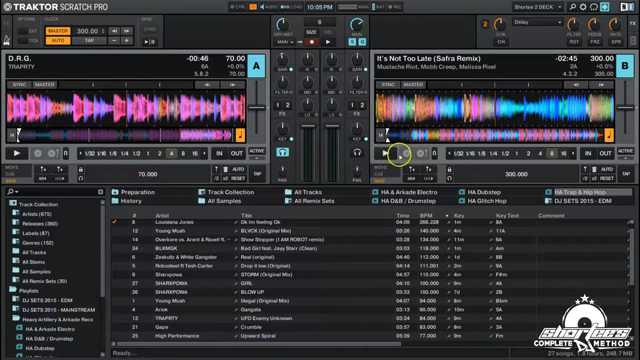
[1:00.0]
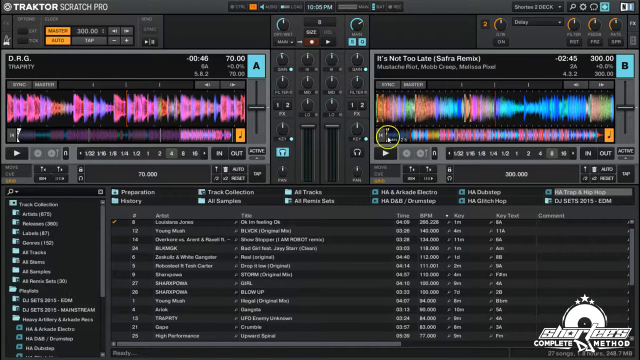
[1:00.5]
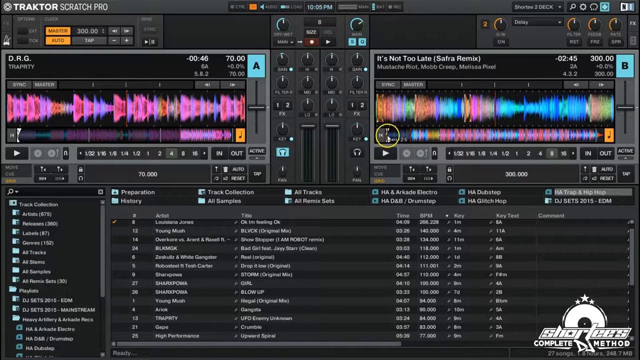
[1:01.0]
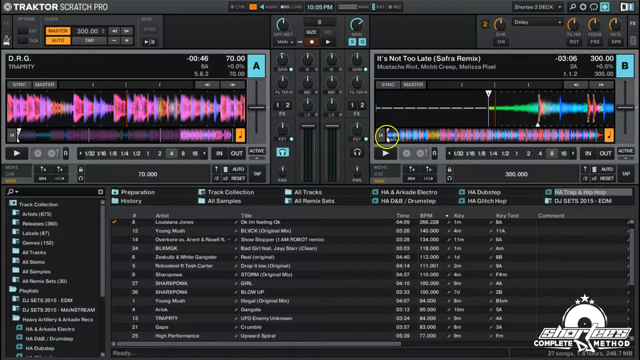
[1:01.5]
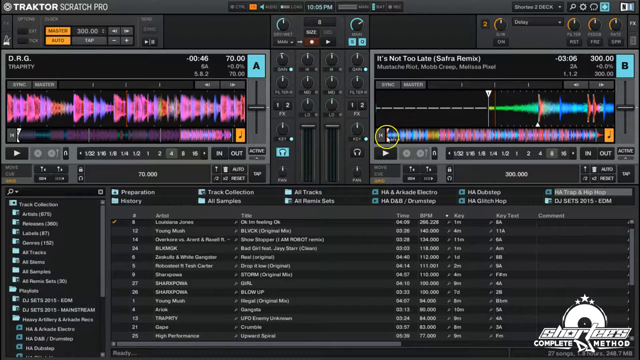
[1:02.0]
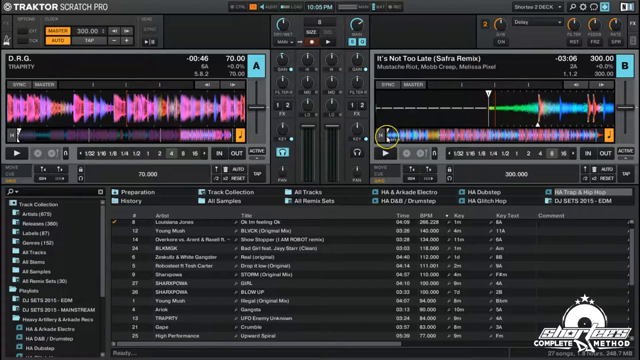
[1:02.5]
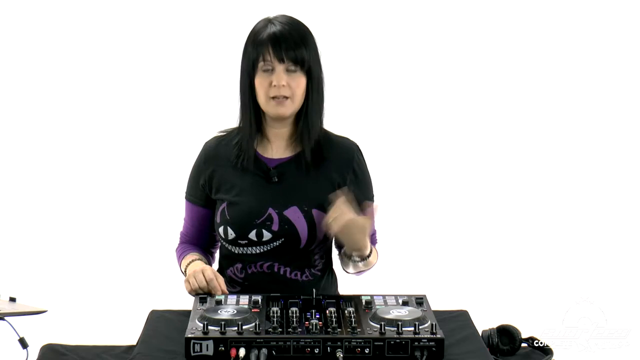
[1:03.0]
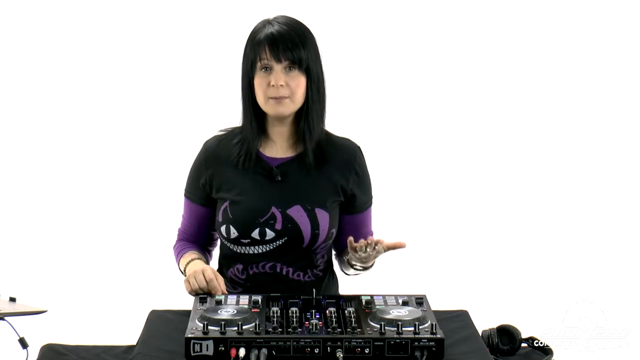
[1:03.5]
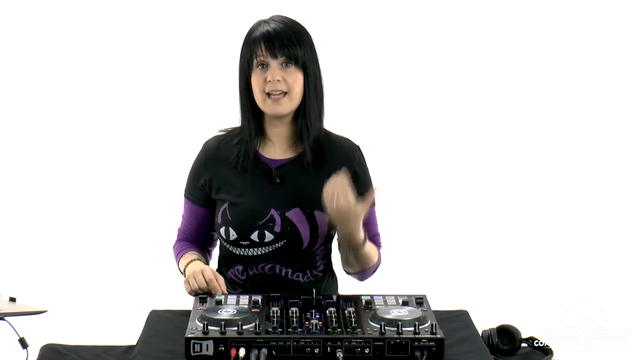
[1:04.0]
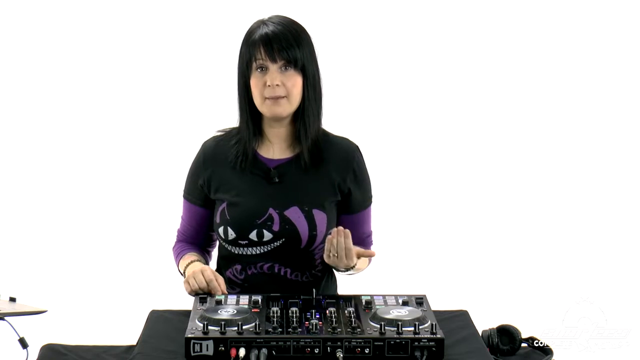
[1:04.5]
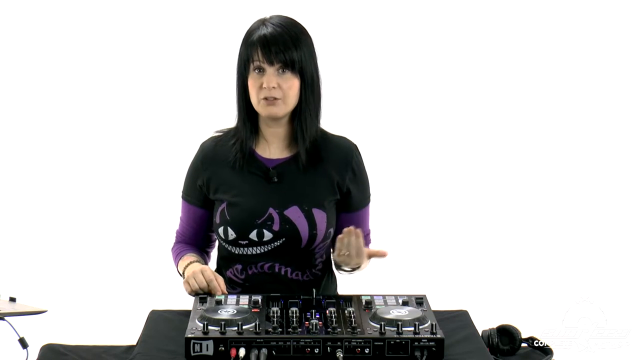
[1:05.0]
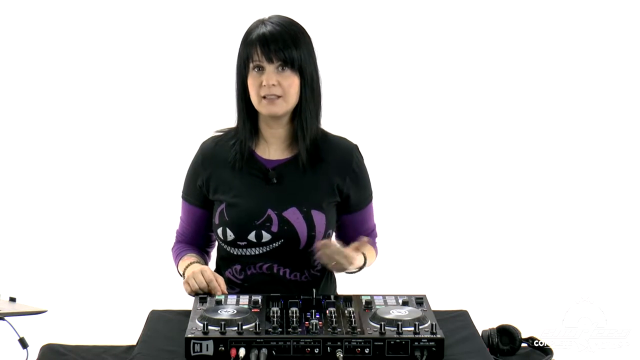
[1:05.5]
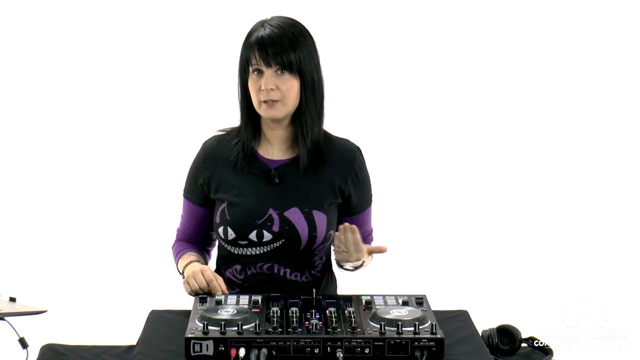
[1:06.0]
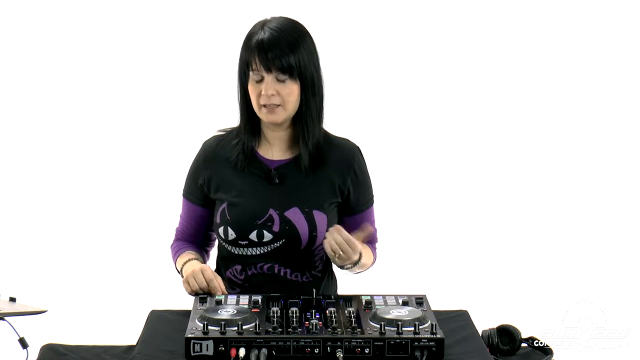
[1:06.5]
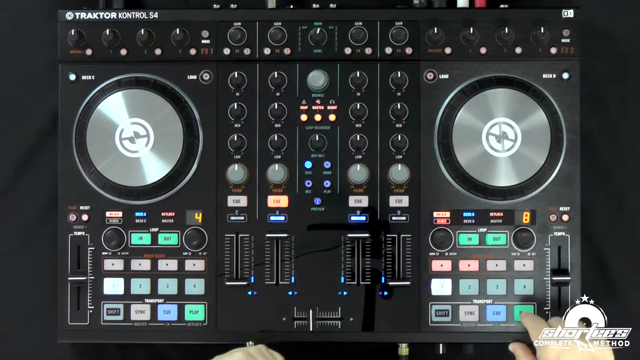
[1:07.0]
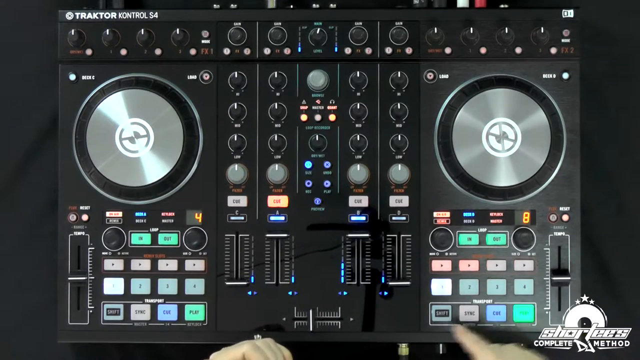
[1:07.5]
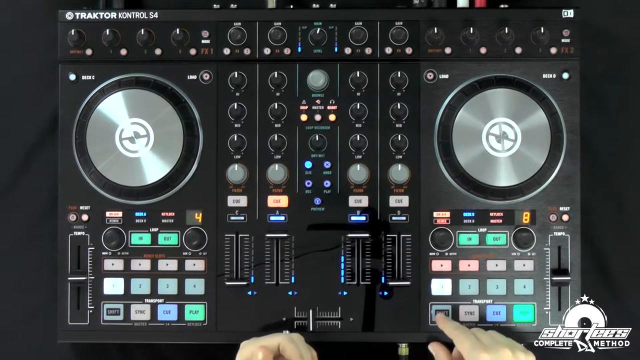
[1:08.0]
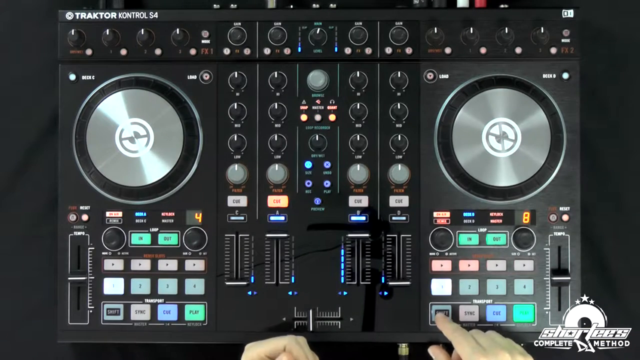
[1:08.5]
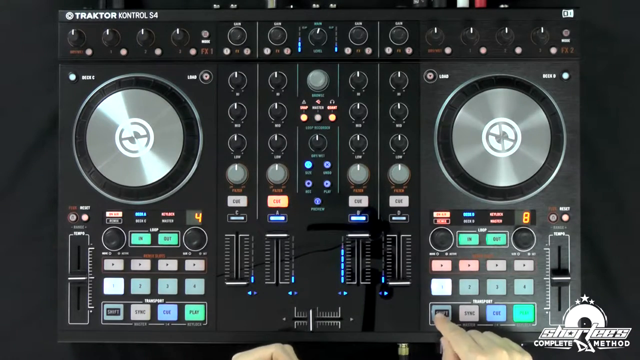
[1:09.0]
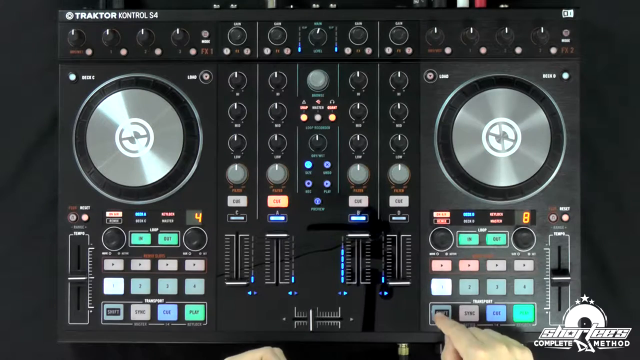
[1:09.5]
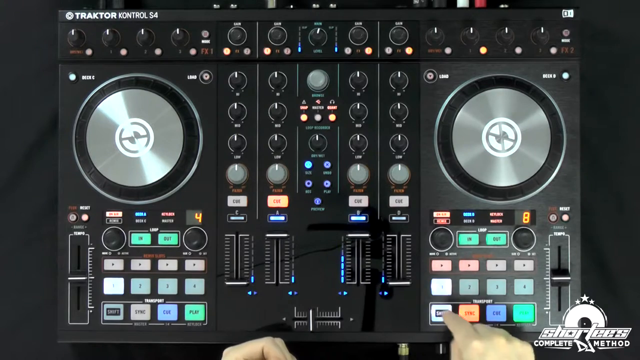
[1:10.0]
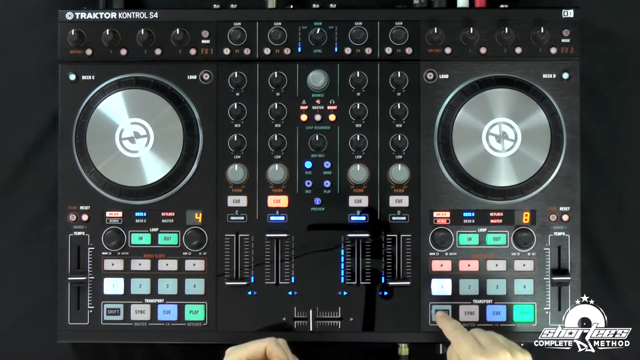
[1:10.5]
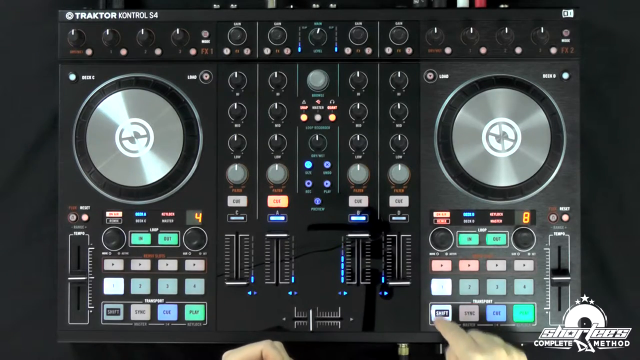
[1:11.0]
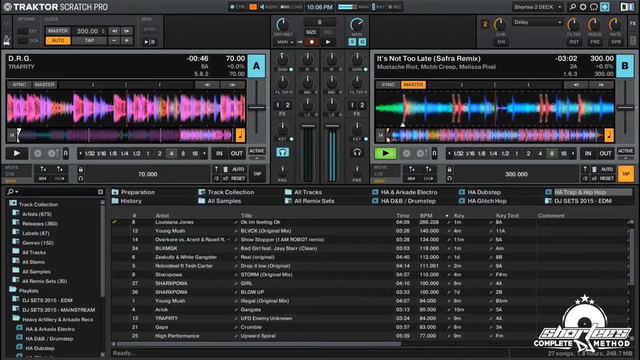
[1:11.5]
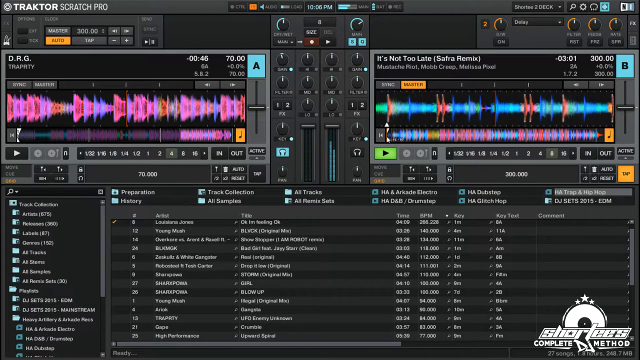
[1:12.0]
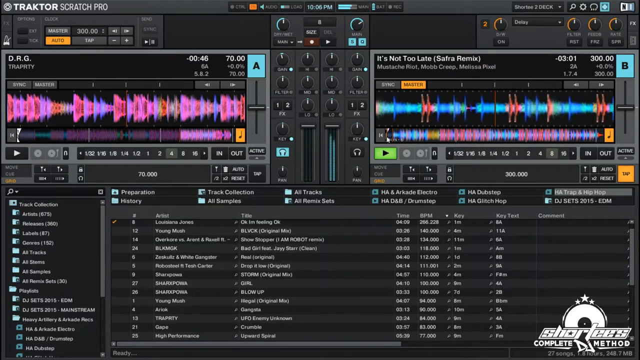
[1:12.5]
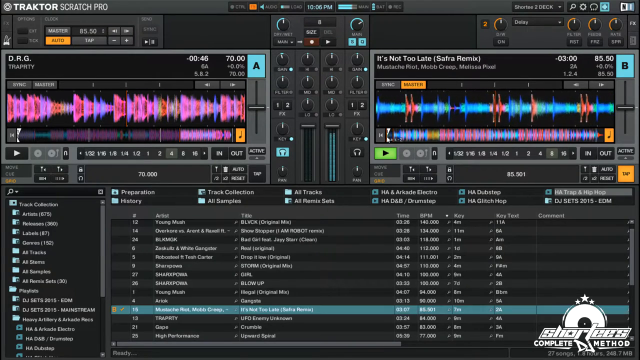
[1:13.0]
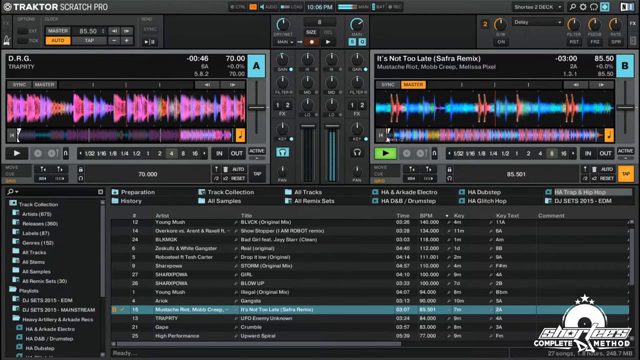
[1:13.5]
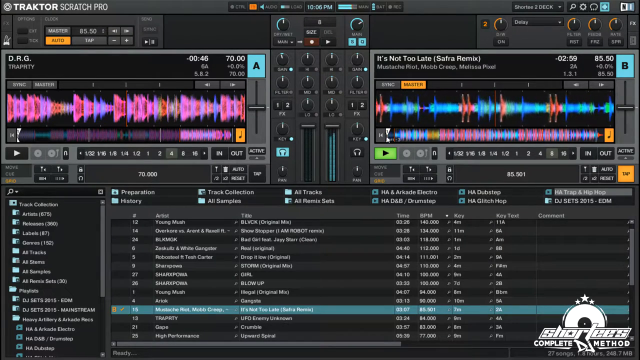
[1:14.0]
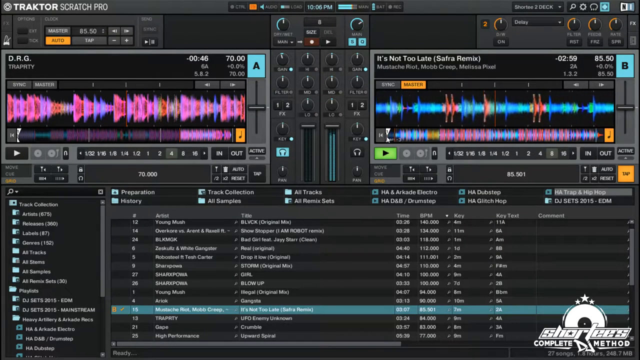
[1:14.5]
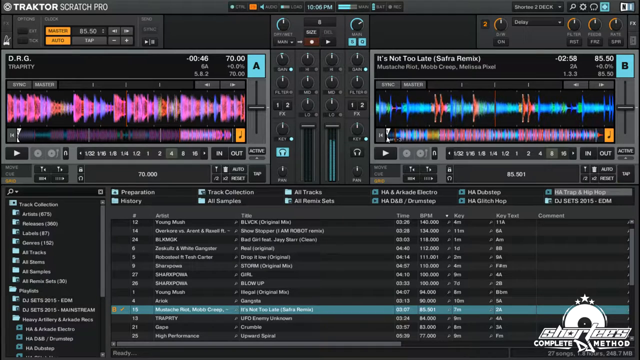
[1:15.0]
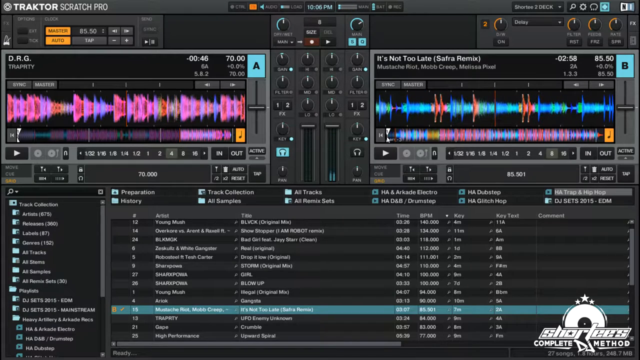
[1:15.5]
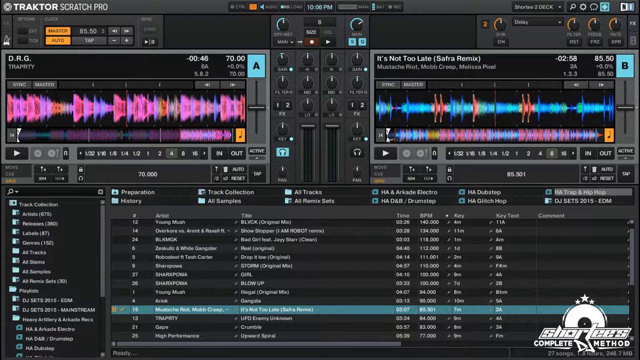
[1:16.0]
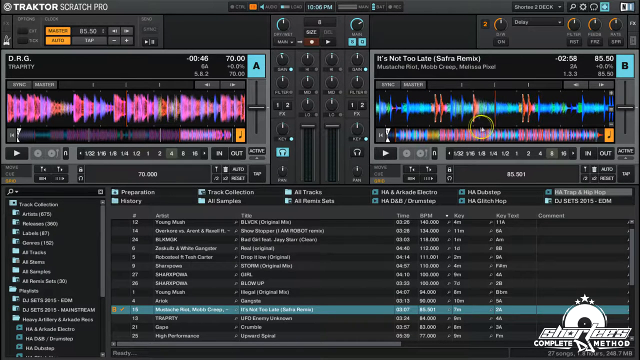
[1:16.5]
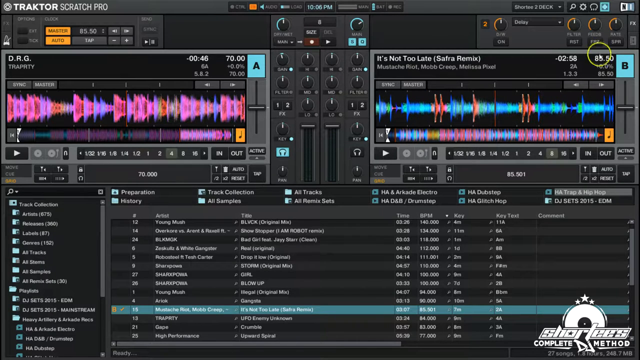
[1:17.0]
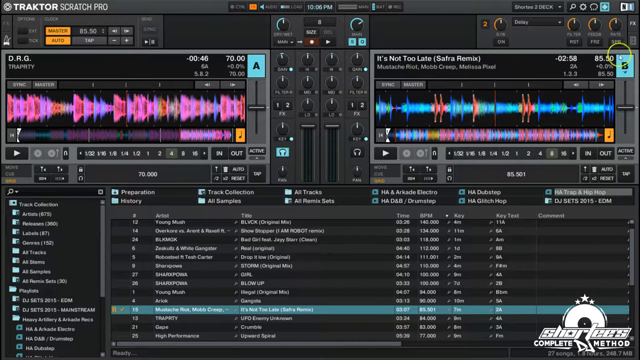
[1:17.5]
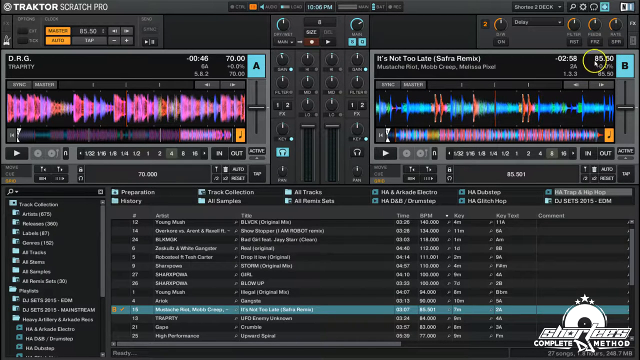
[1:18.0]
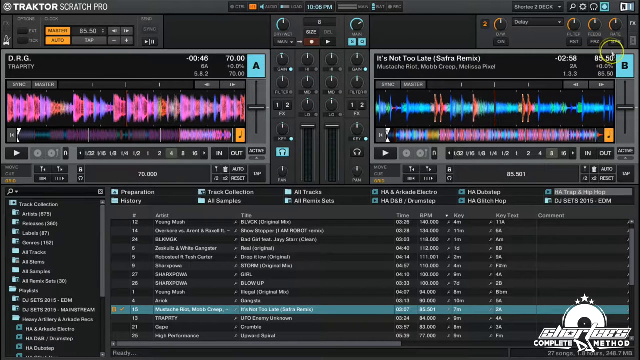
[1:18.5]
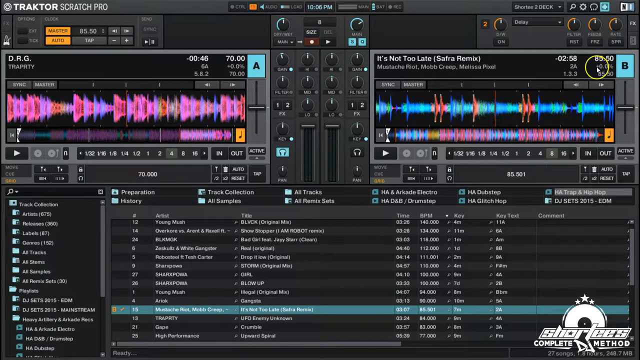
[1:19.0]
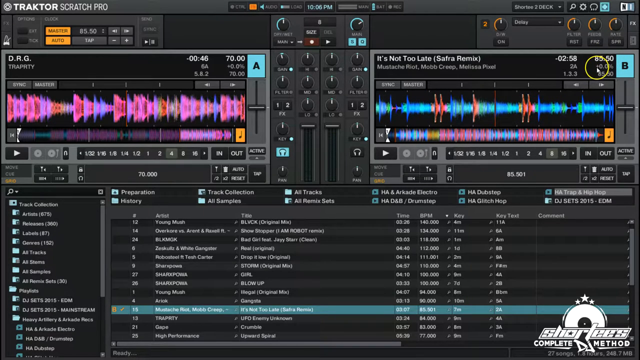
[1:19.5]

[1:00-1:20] The close-up of the digital synthesizer or mixing board, the "Traktor Scratch Pro" setup, continues. On the black screen, with lots of small writing that cannot be made out, items such as "preparation," "history," "track collection," "all samples," "all tracks" and "all previous sets" are visible, along with entries including "Arcade Electra." One box says "DRG" and has colors pointed from left to right. The box just to the right of it shows the song being played, "It's Not Too Late" by Saffron Remix, and it also has various colors moving from left to right.